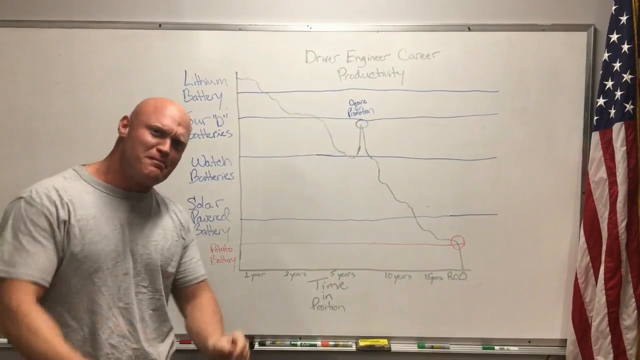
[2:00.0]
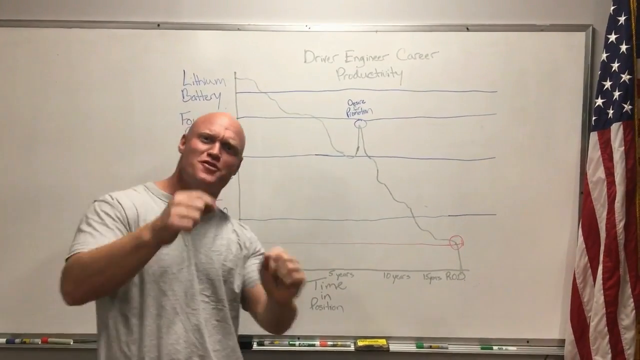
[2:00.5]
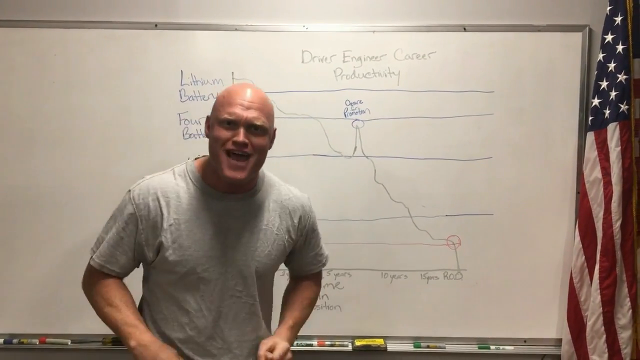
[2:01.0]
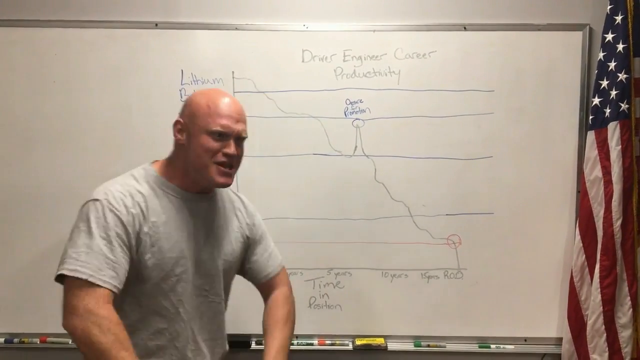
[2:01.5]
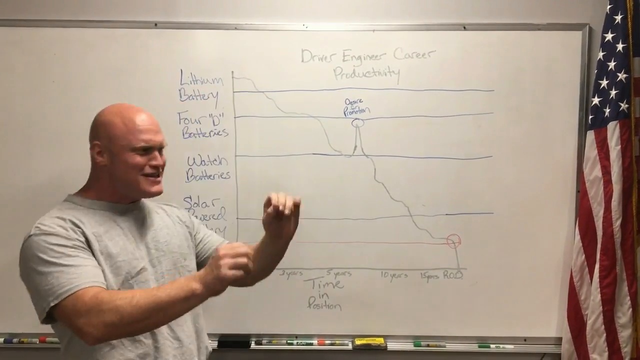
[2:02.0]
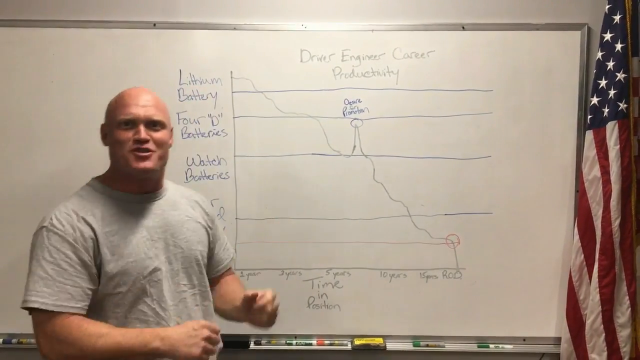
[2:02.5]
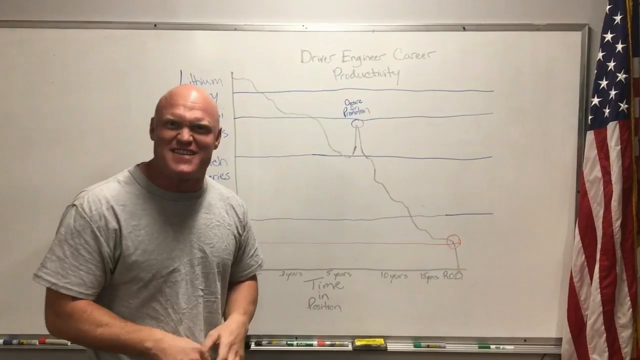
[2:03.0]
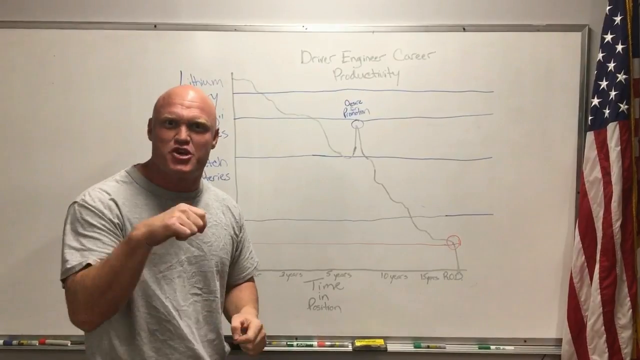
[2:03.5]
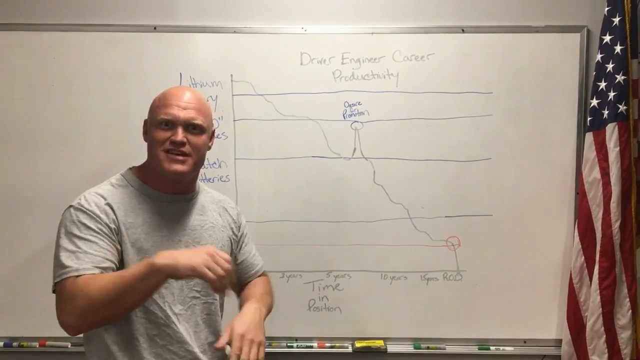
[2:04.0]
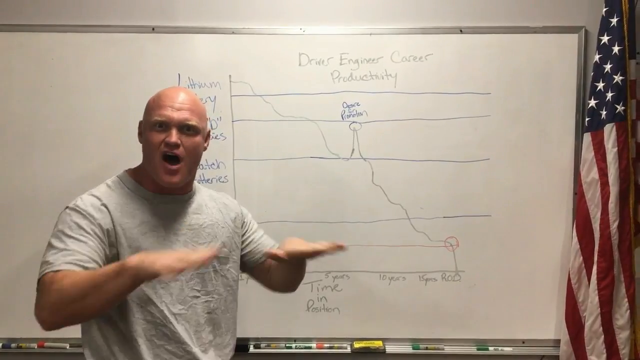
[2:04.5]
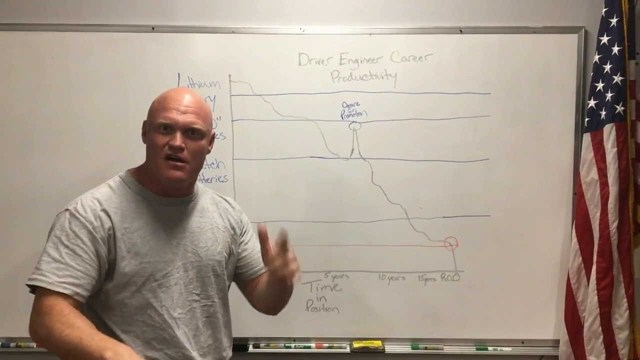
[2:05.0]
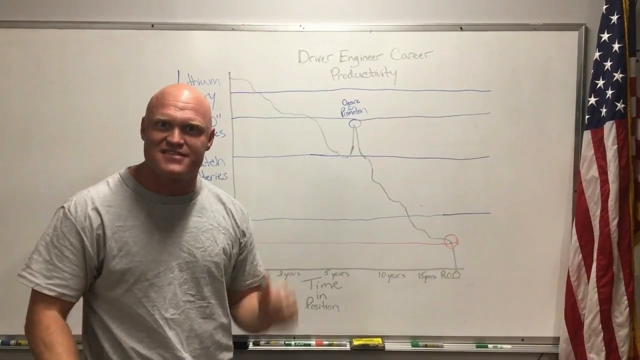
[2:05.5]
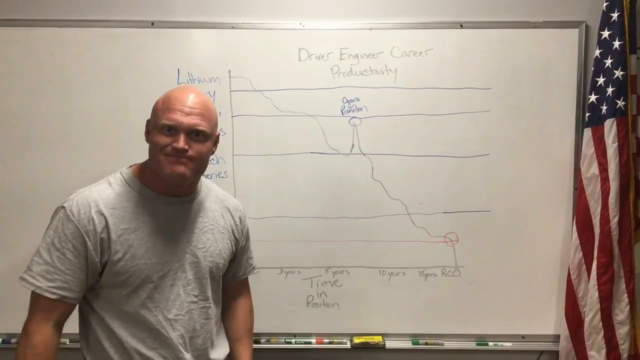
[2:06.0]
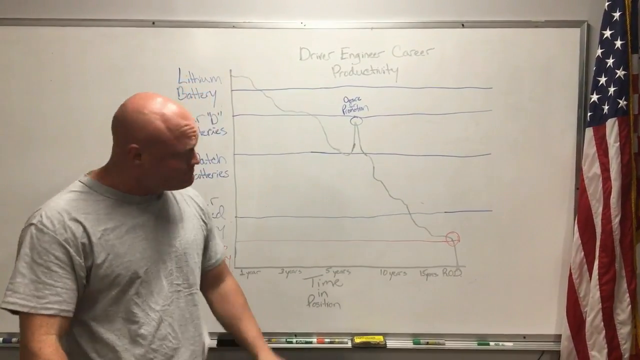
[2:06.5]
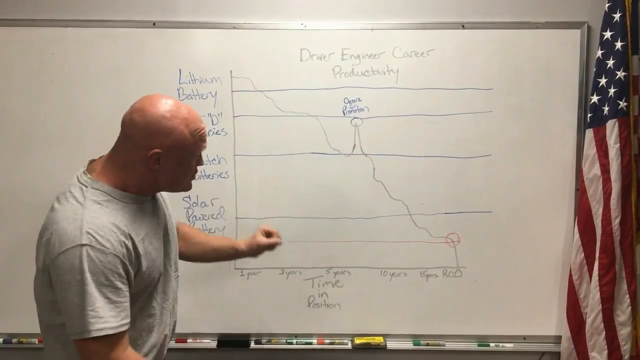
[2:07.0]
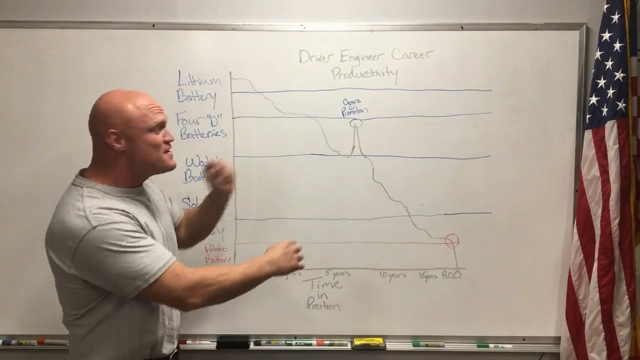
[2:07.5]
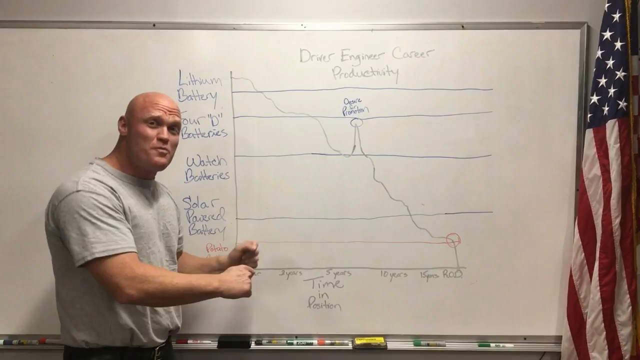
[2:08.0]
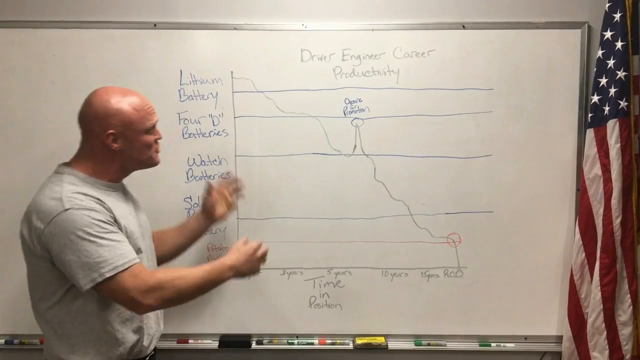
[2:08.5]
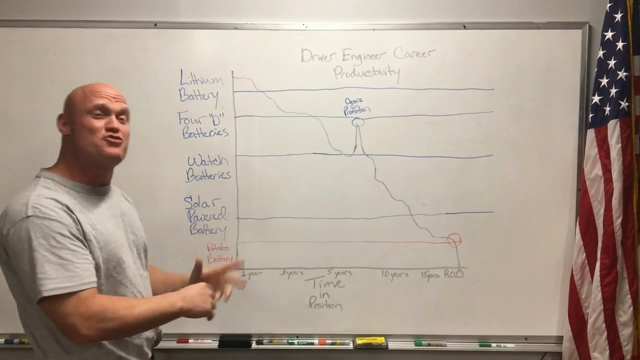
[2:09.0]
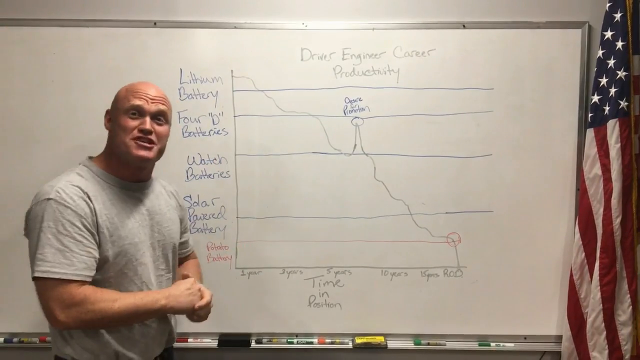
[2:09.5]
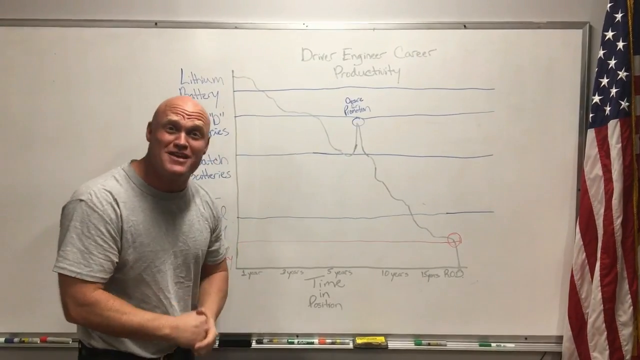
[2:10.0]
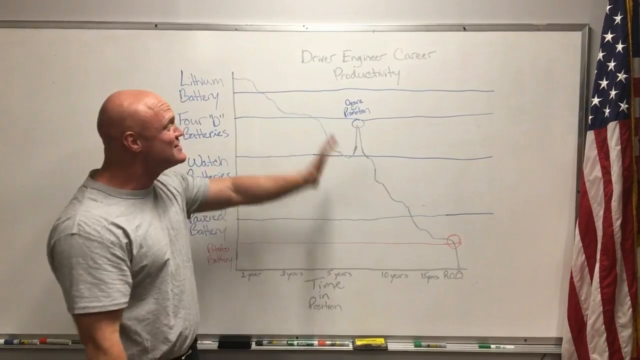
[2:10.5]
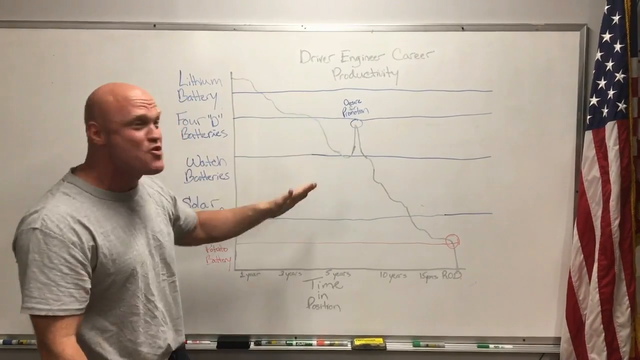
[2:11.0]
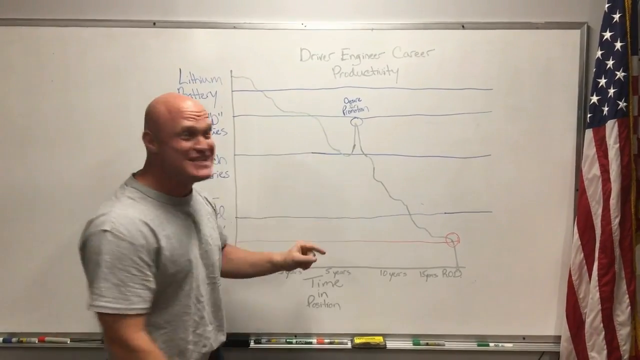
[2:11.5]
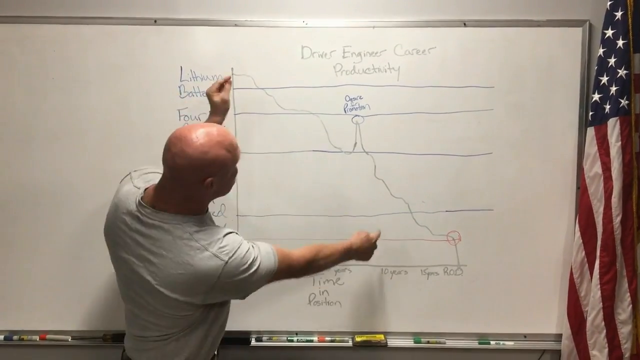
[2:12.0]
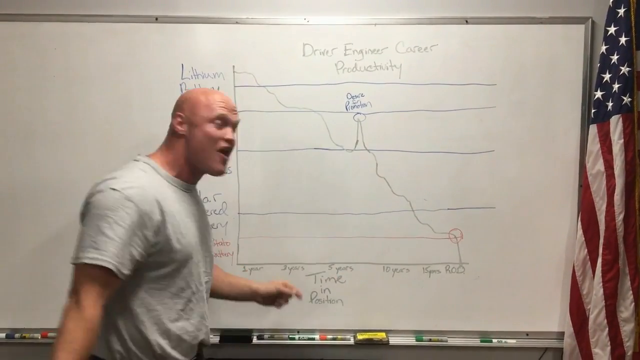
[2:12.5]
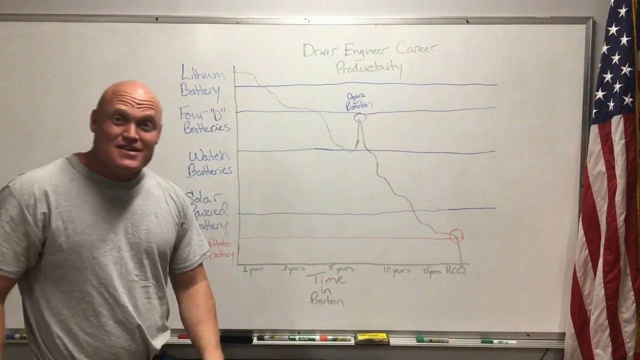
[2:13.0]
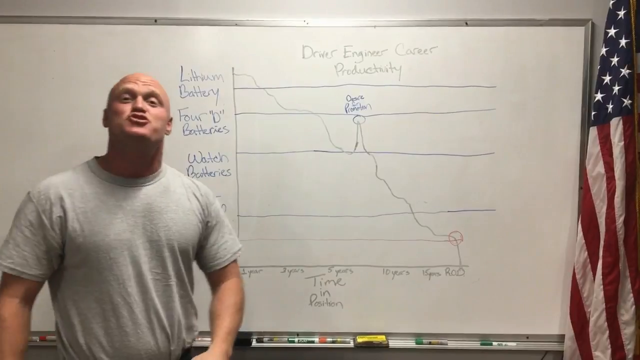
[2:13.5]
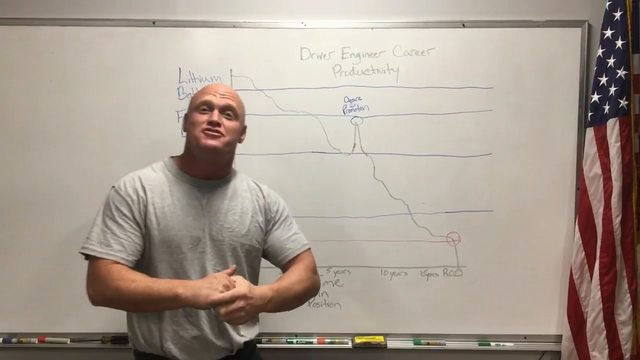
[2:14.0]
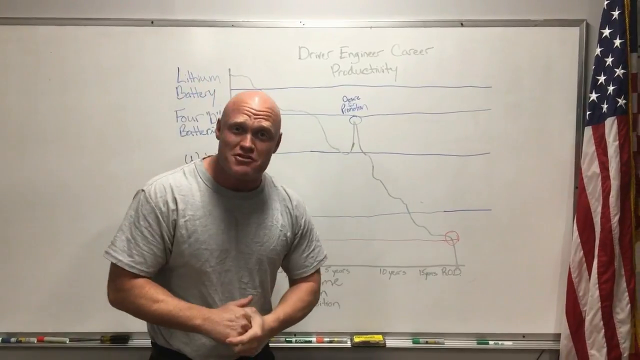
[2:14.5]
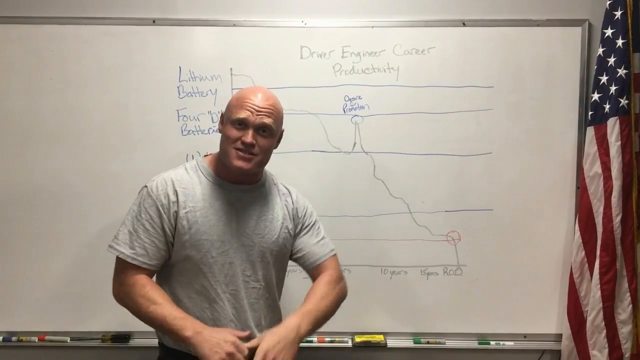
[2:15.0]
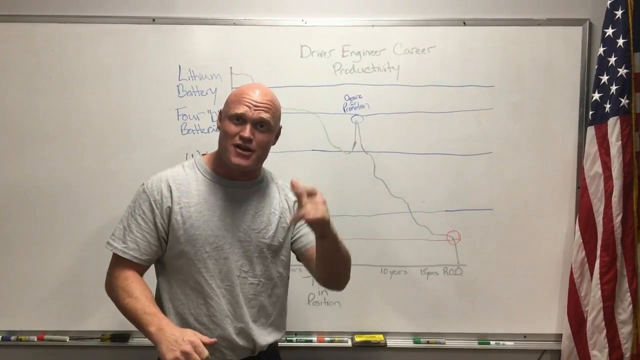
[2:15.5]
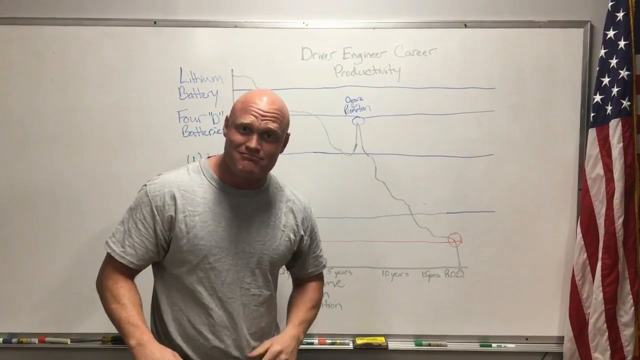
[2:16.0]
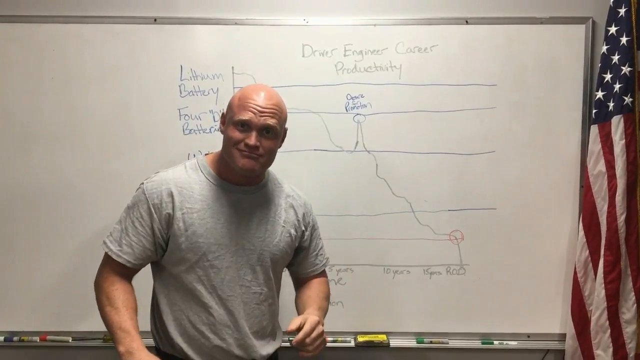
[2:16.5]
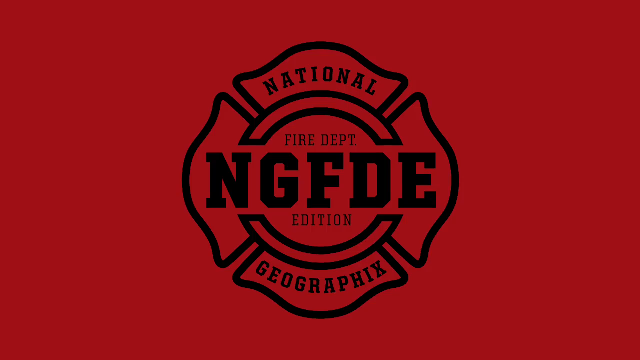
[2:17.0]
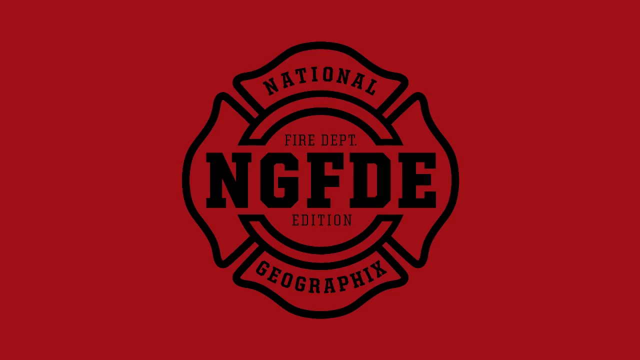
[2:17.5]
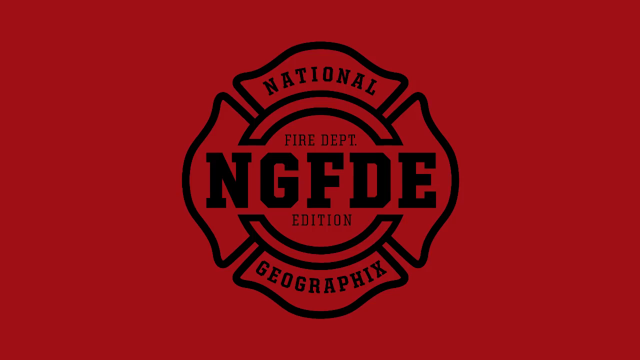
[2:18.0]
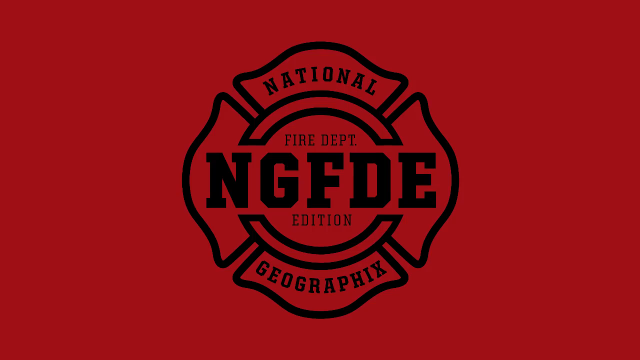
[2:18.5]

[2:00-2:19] A pretty buff Caucasian man with no hair, wearing a gray shirt, stands in front of a hand-drawn graph on a whiteboard. He is energetic and talkative. An American flag is to his right. Near the end, a red background appears with a logo; inside the logo is "NGFDE," with "Fire Department" above it, "Addition" below it, "Geographics" below that, and "National" at the top. A symbol, possibly a shield or a flower, circles all of these words and is composed of various shapes flowing in different ways.